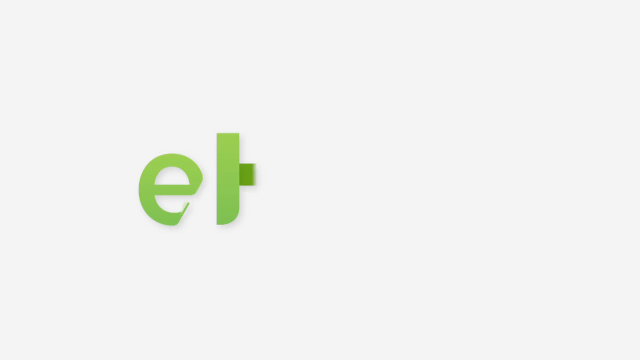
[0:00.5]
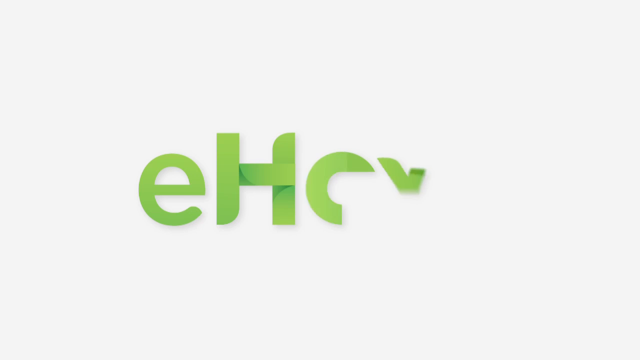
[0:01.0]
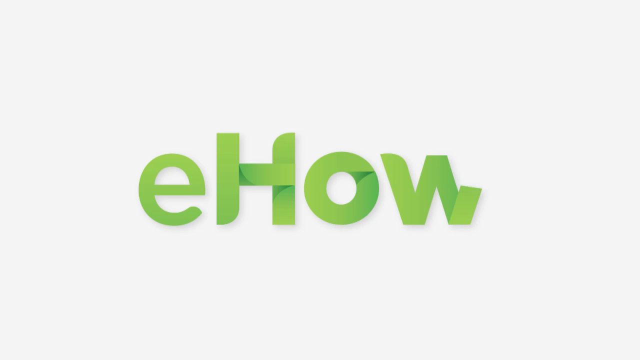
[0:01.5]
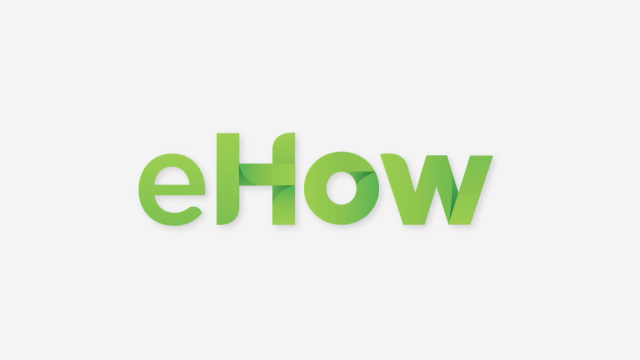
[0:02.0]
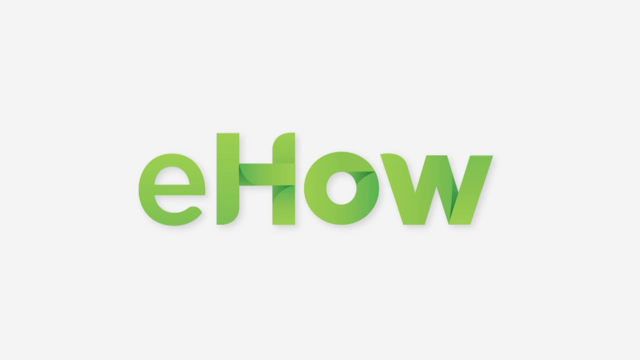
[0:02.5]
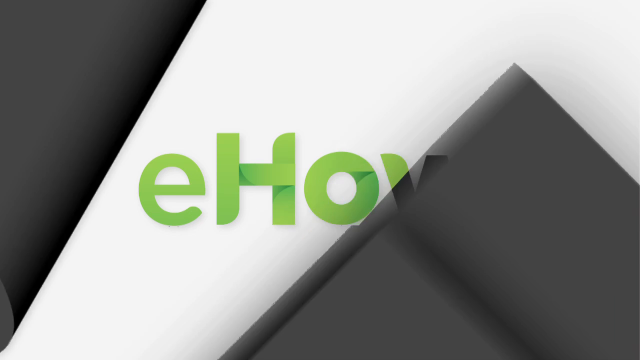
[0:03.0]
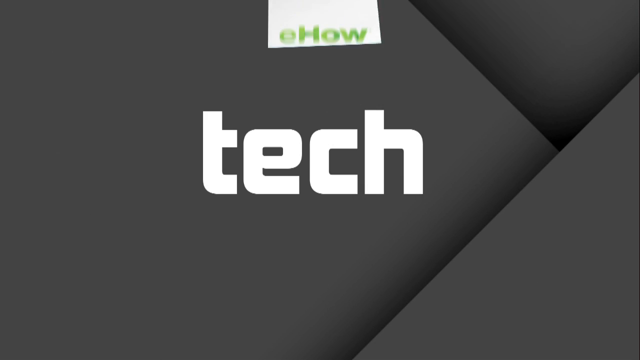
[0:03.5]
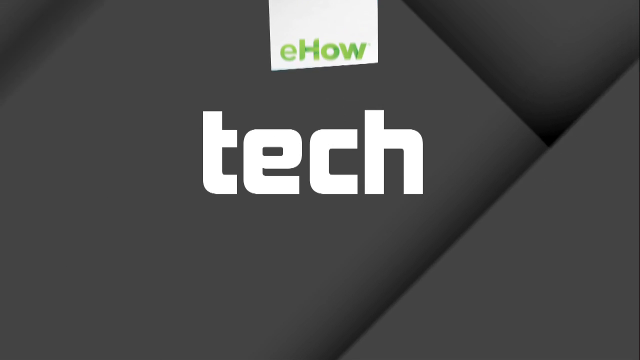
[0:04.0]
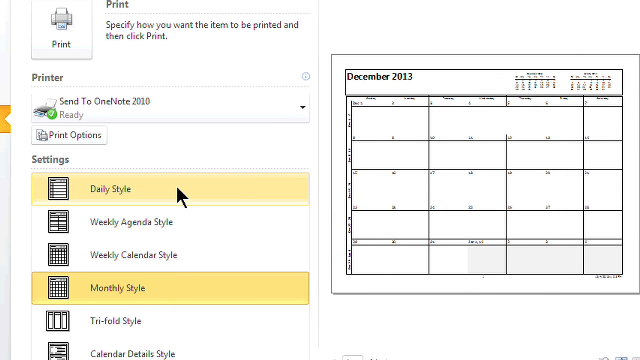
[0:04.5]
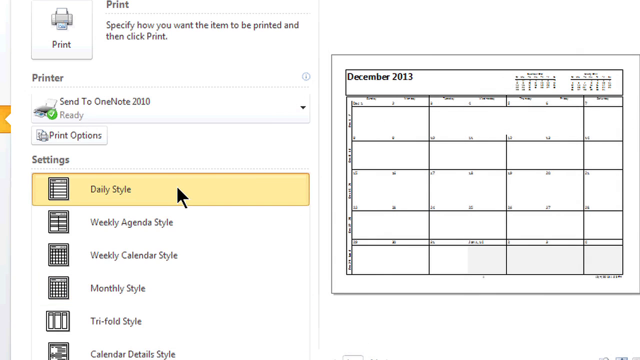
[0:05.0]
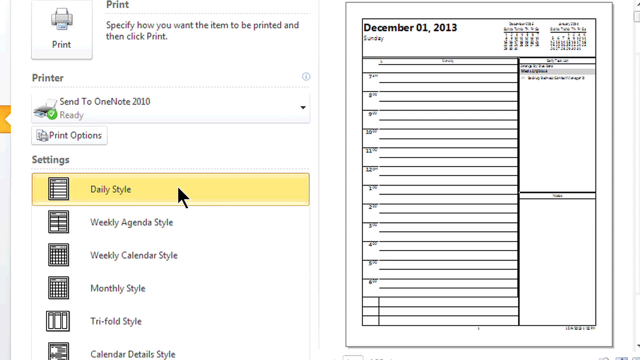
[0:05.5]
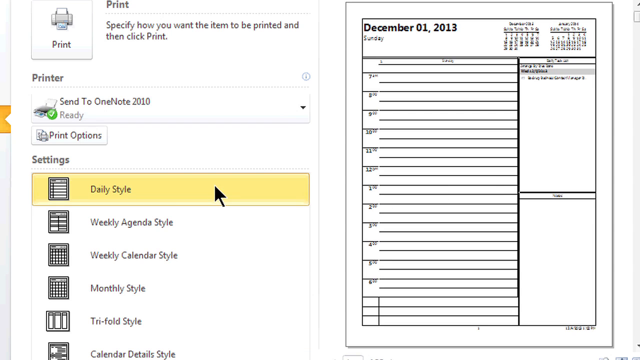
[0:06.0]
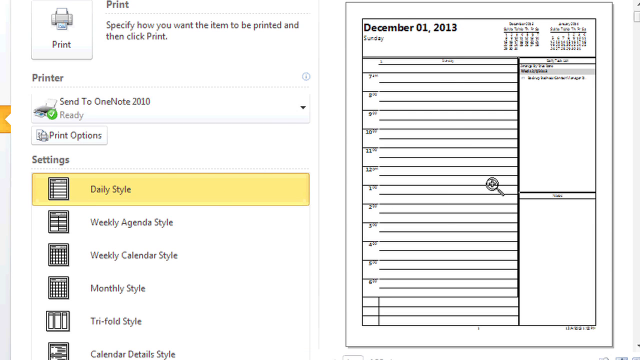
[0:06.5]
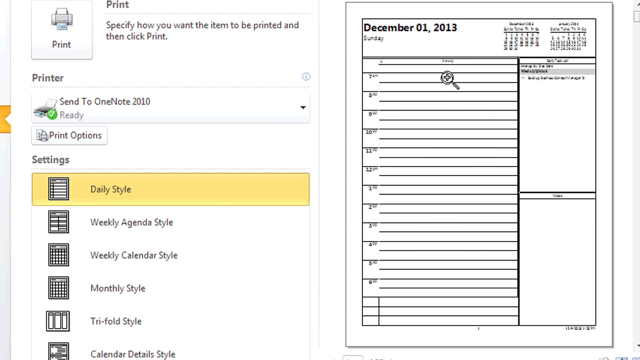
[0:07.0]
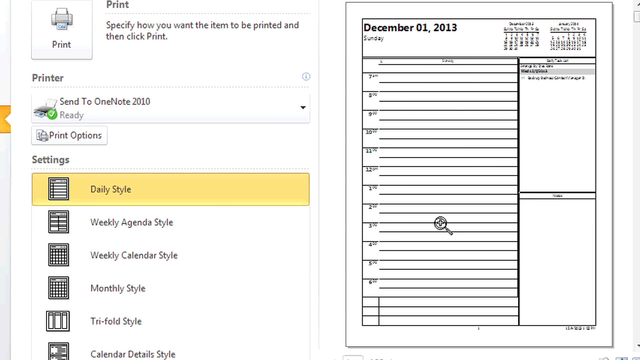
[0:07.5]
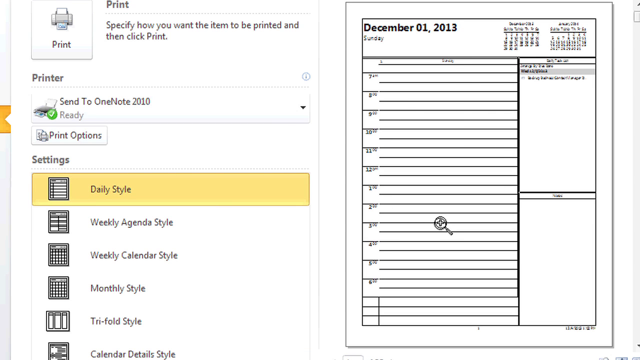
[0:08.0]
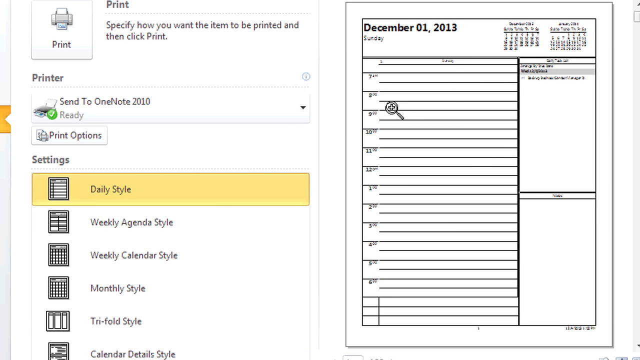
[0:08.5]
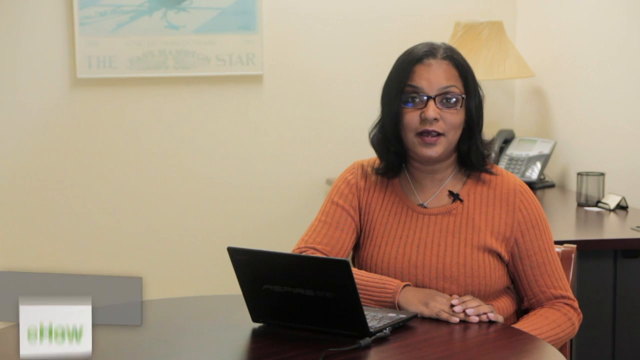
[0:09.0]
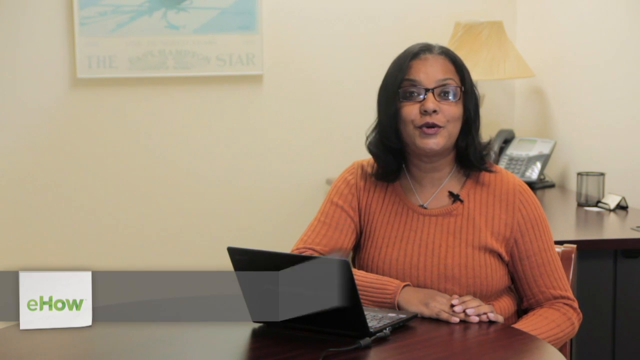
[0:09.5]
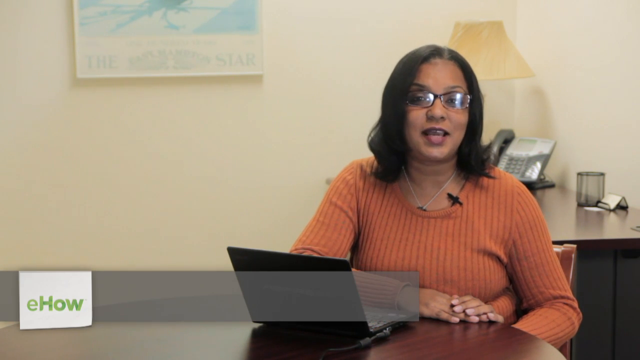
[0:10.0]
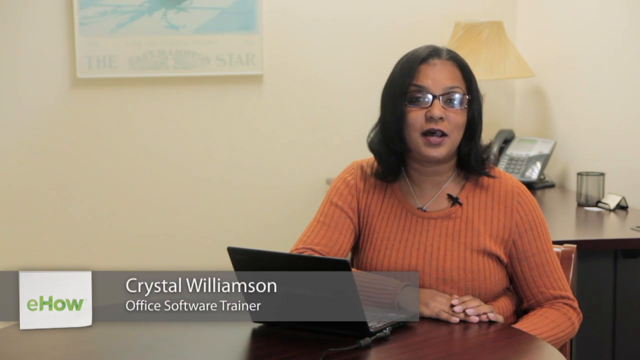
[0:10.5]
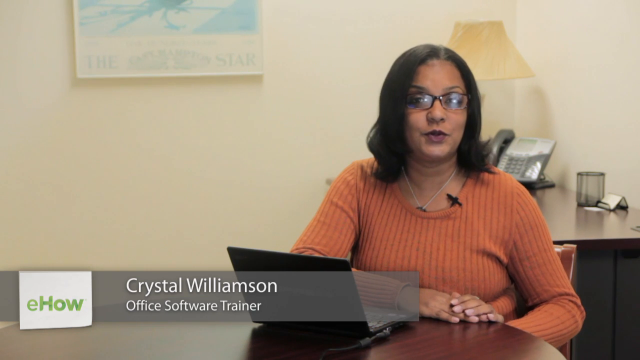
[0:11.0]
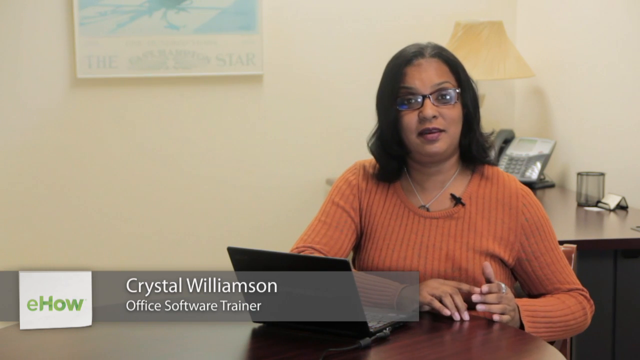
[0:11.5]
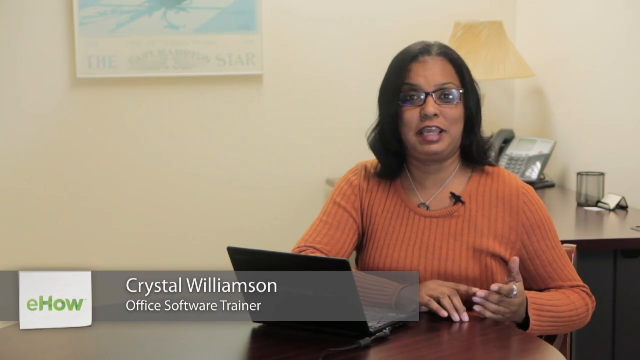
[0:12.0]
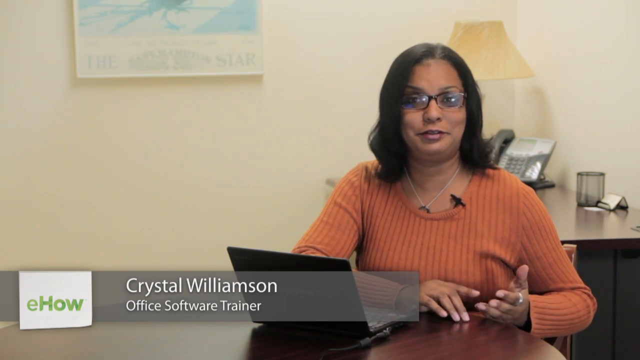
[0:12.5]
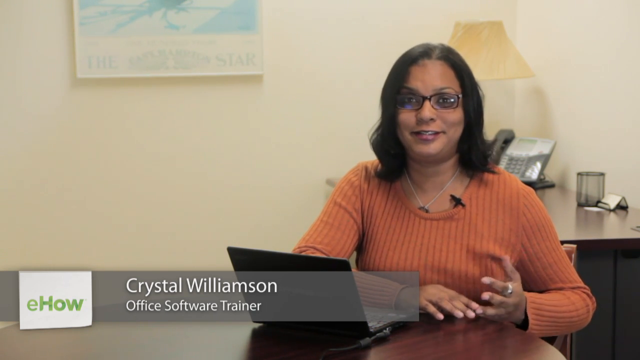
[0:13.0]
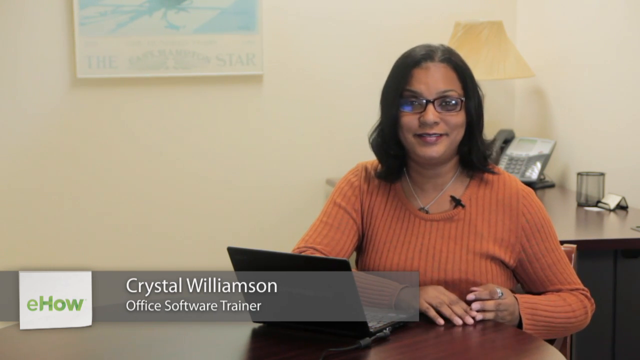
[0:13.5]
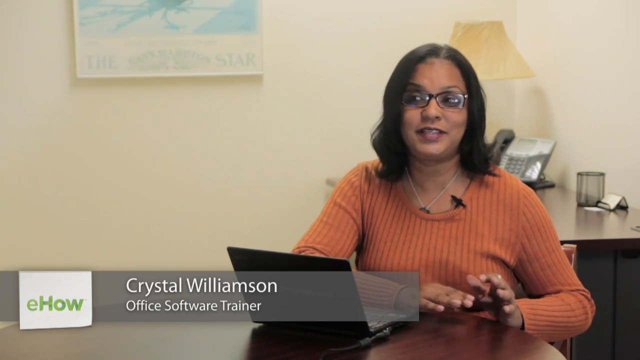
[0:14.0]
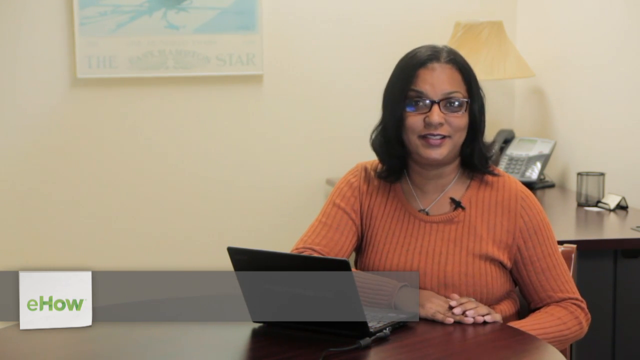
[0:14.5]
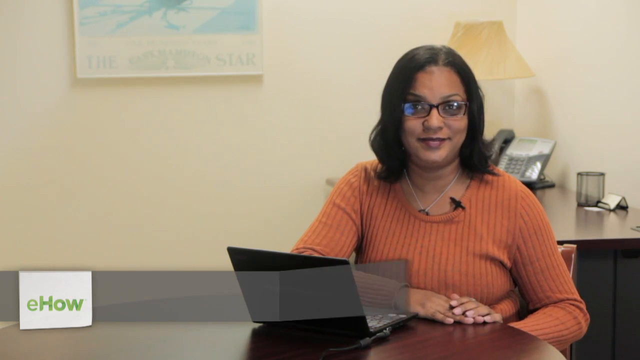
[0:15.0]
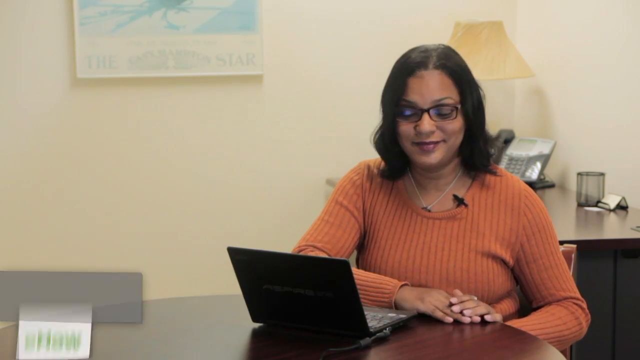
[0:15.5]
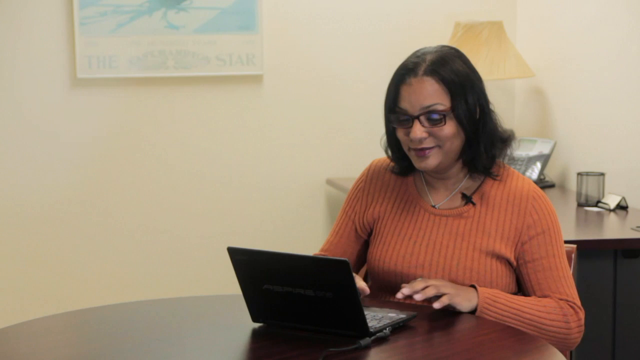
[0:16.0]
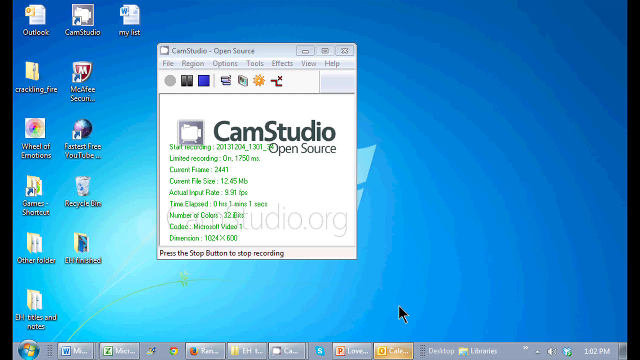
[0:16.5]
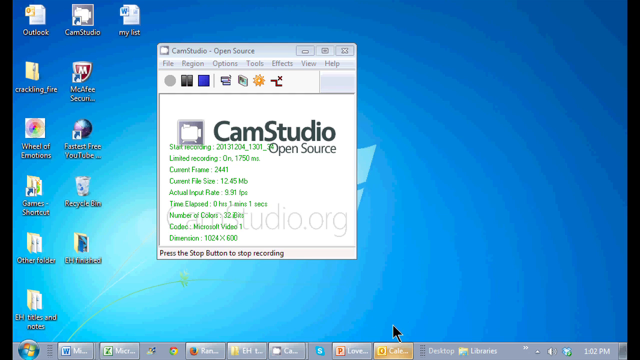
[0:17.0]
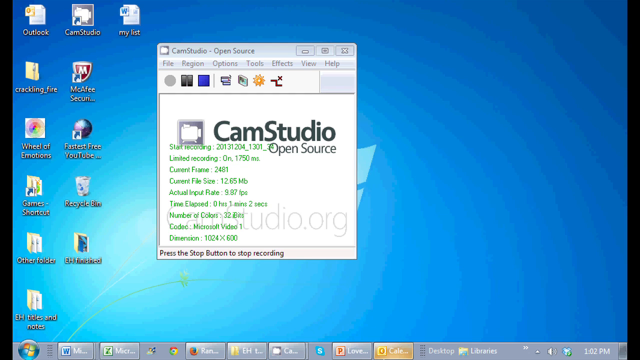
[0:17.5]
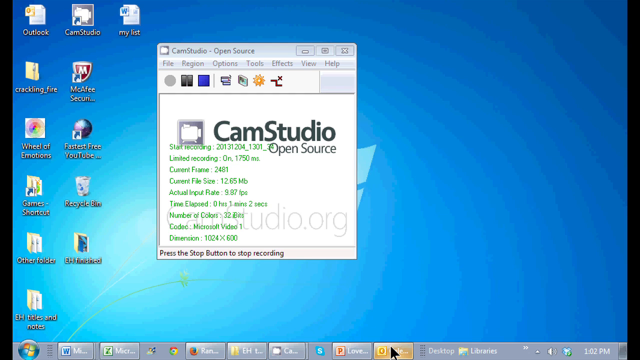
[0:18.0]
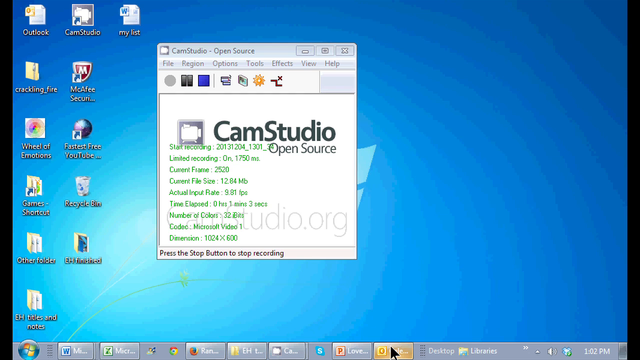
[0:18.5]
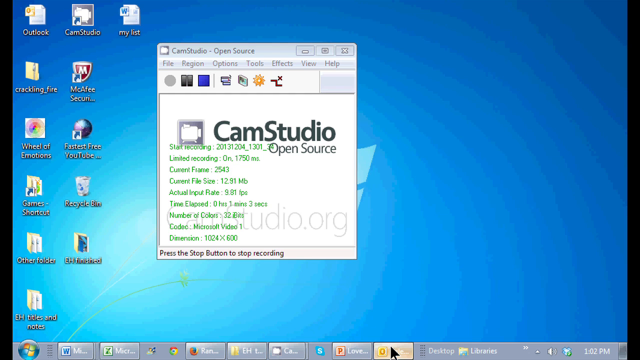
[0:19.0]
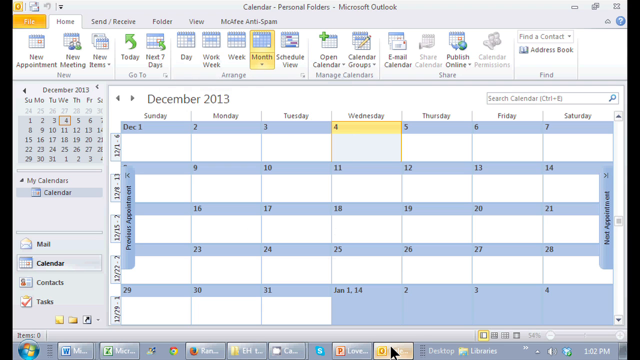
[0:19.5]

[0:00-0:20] The video opens on a white background with large green letters in the middle spelling "E-H-O-W." A small animation transitions to a black background with the word "tech" written in the middle. The scene then changes to what appears to be a print screen. At the top left it says "print," and to the left of that word is a small square with a little printer icon and the word "print" underneath it. To the right is the text "specify how you want the item to be printed and then click print." Below that is the word "printer" and a small rectangular drop-down box containing the printer's name, "send to OneNote 2010," along with an indication that the printer is ready. At the bottom left of this boxed area is the word "settings" with multiple settings listed: "daily style" in the first slot, "weekly agenda style" in the second, "weekly calendar style" in the third, and "monthly style" in the fourth. Two of them, daily style and monthly style, are highlighted. On the right is a calendar for December 2013. The person selects the daily style, which switches the image on the right to December 1st, 2013. The scene then changes to a woman sitting in a chair, with her name, "Crystal Williamson," at the bottom left and a laptop in front of her. She has a black skin tone and black hair and wears an orange long-sleeve shirt. The scene then goes back to a desktop image.